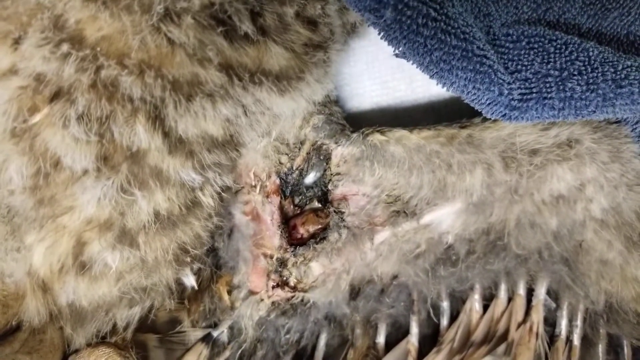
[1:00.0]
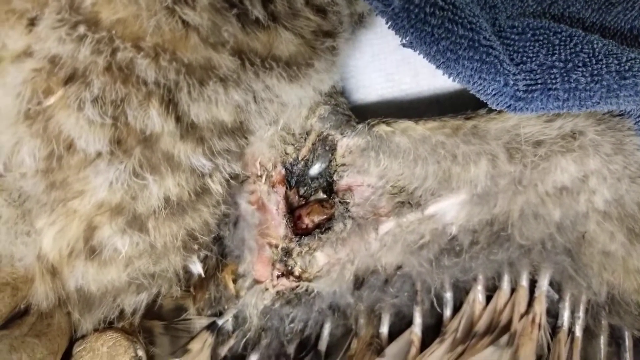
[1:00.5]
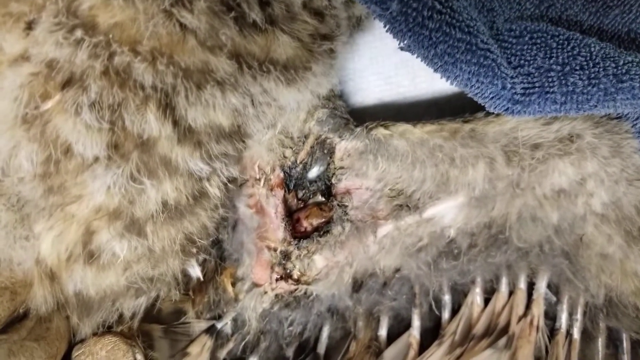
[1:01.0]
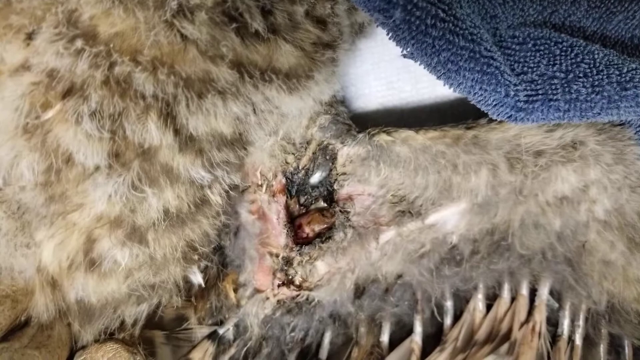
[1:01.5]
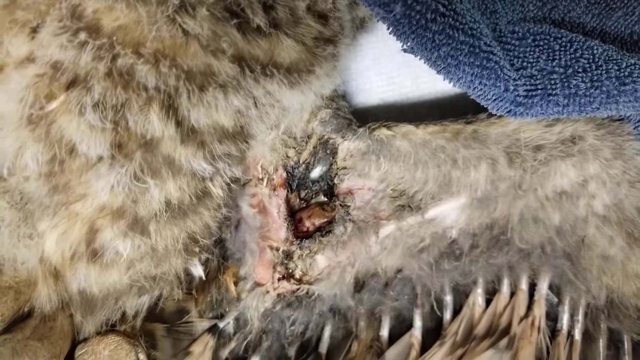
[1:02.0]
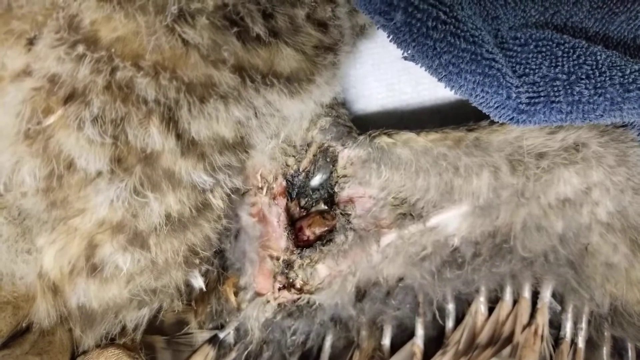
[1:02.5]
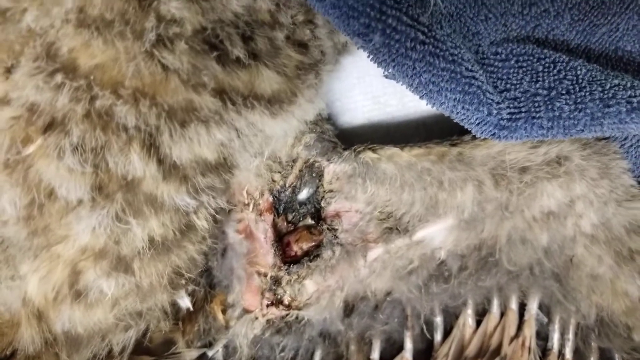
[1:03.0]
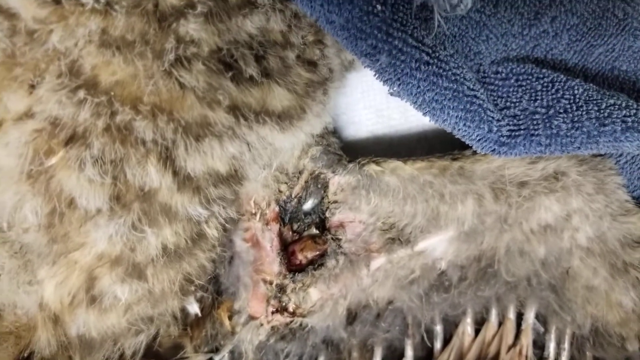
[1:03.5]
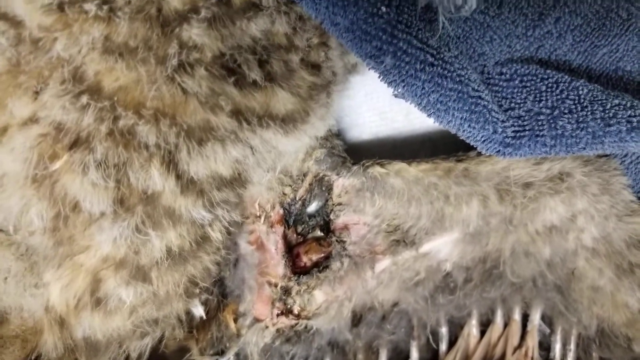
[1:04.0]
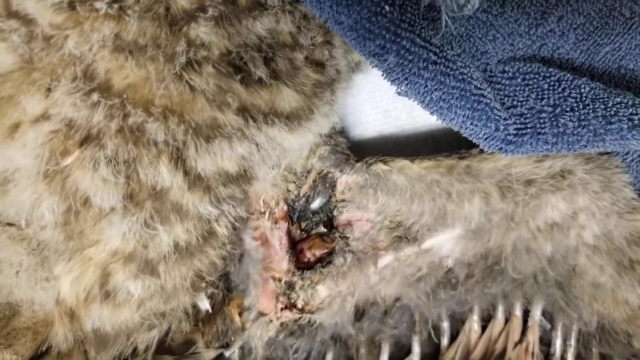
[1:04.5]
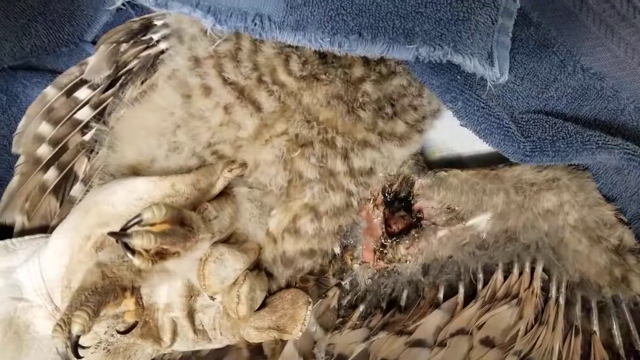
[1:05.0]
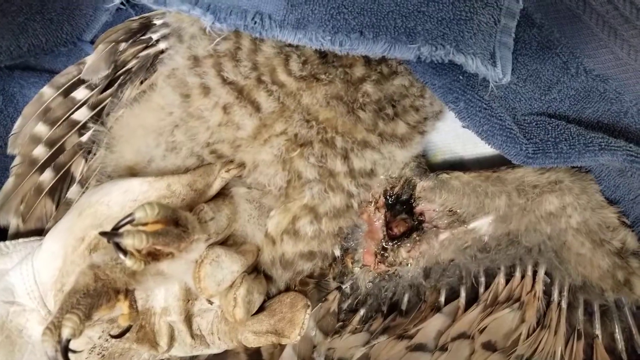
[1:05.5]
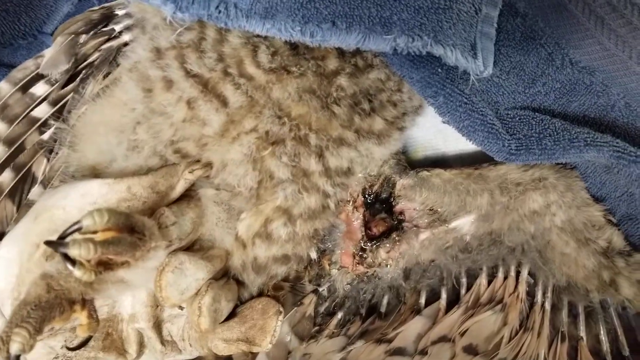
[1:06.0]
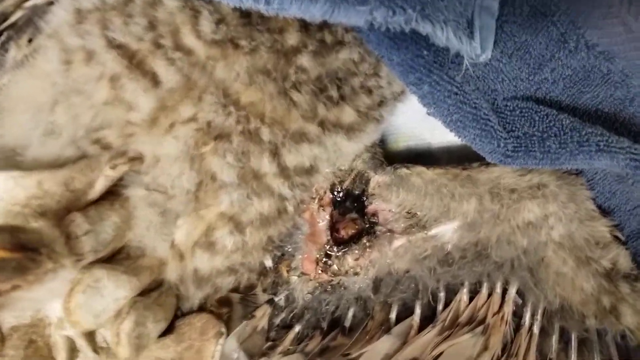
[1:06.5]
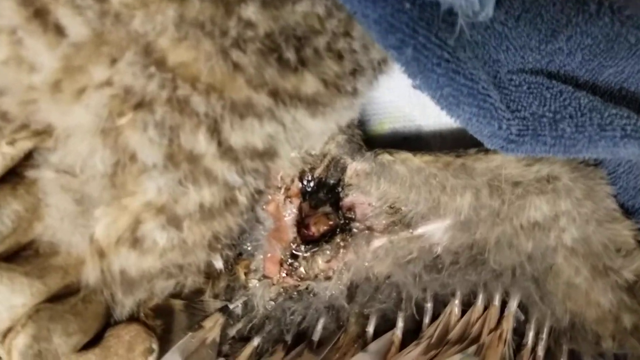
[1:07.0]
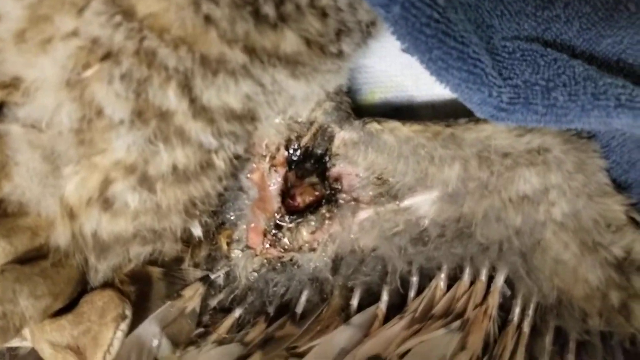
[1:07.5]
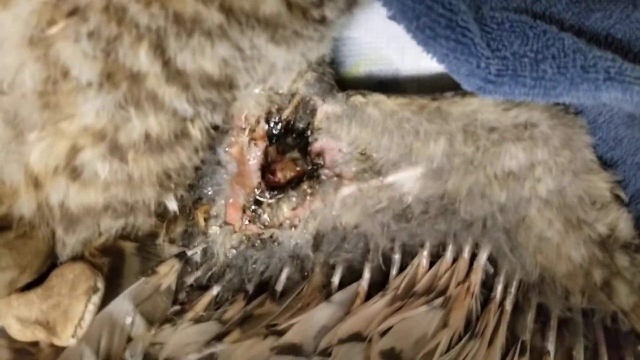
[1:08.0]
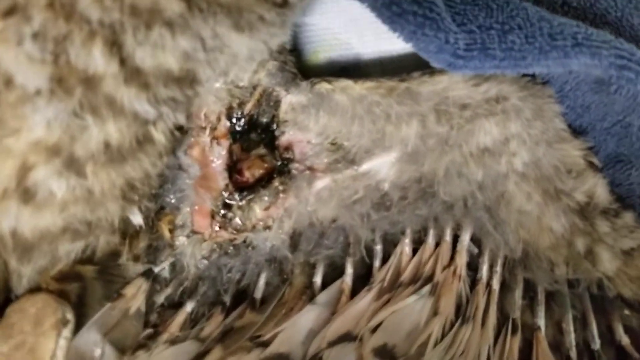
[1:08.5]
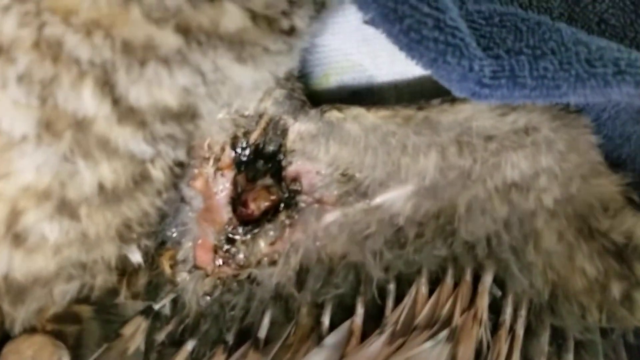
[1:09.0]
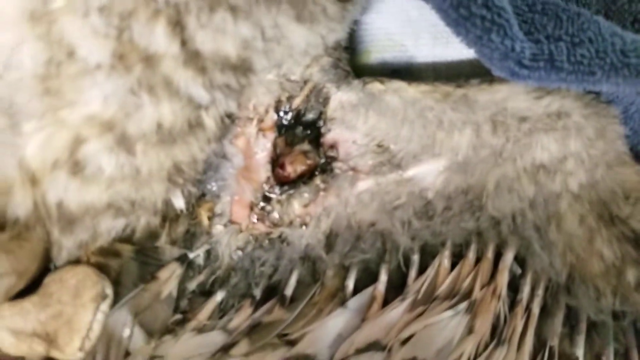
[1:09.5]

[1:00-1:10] The camera stays focused on the wound, then a sudden editing cut brings back a view from further away of the bird laid out on the surface. A talon is very clearly visible to the left, with more feathers in the top left. The view is higher up than the initial one, so the feathers on the bottom right are less visible. The camera then gets closer to the wounded area again, which now has some white kind of dust sprinkled on it that was not there before, so perhaps something has been applied to the wound during the cut.